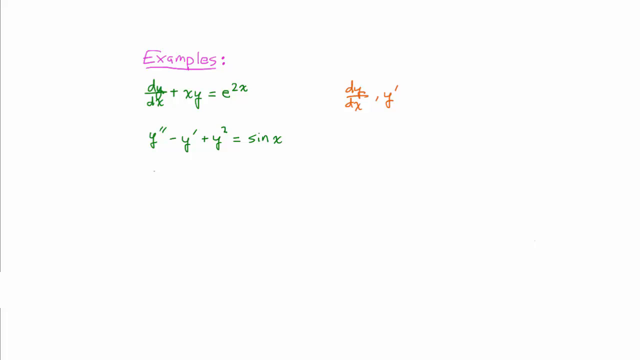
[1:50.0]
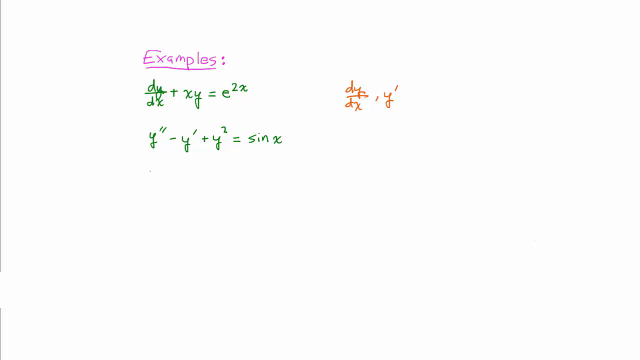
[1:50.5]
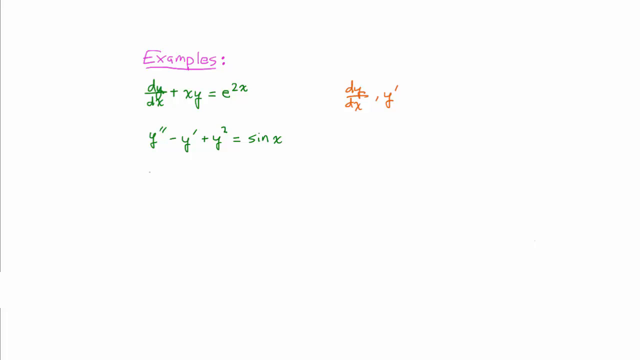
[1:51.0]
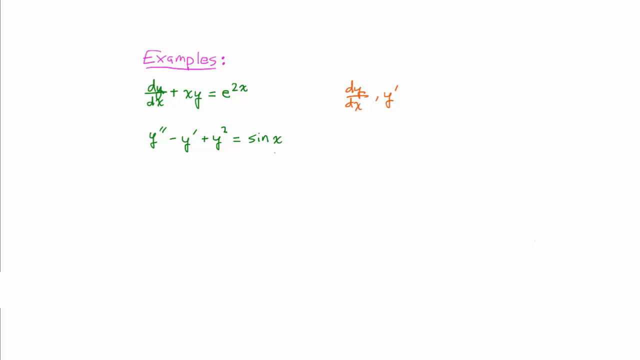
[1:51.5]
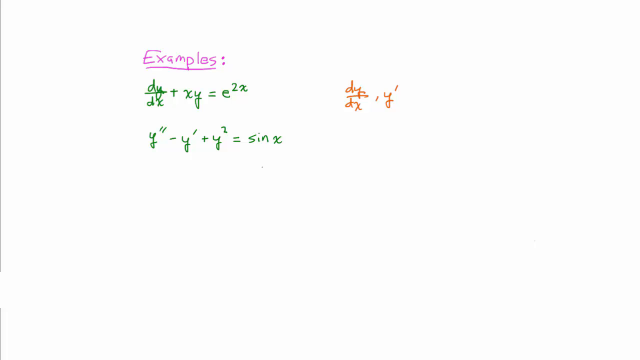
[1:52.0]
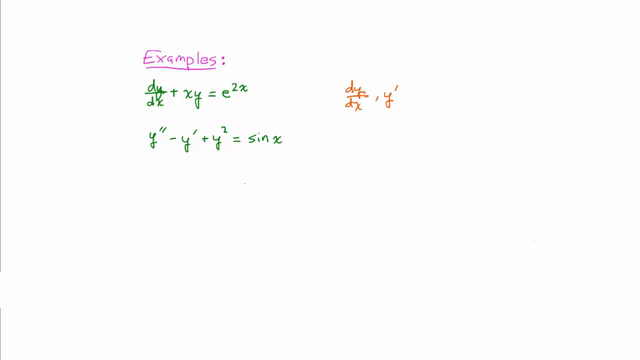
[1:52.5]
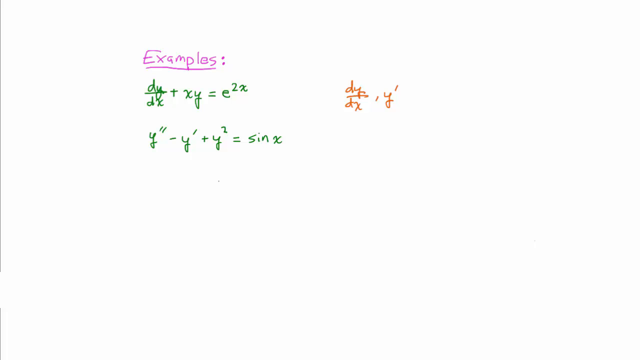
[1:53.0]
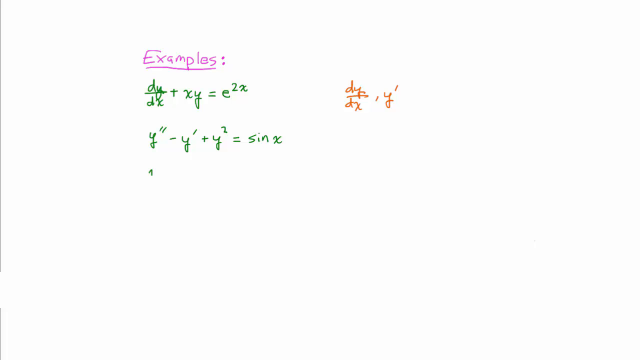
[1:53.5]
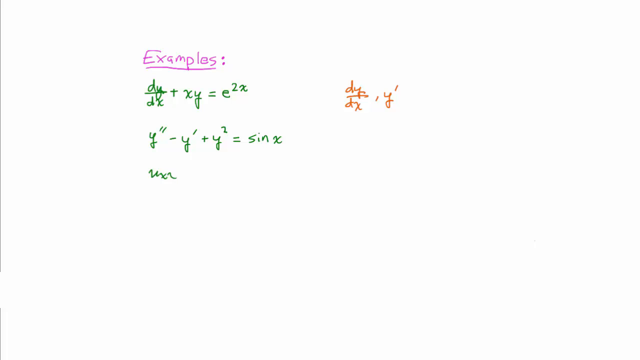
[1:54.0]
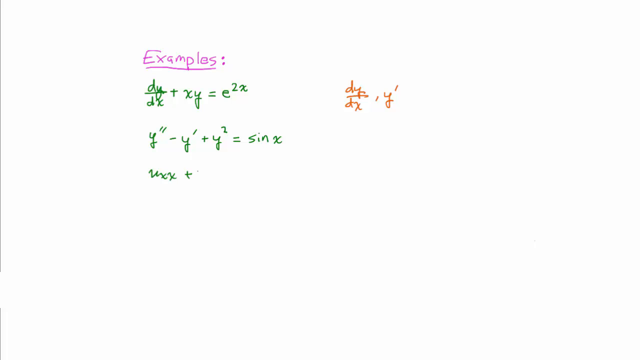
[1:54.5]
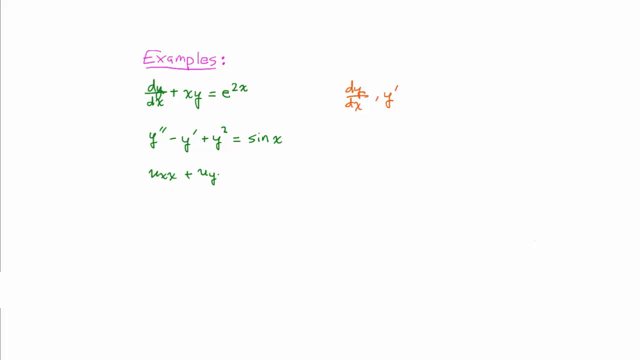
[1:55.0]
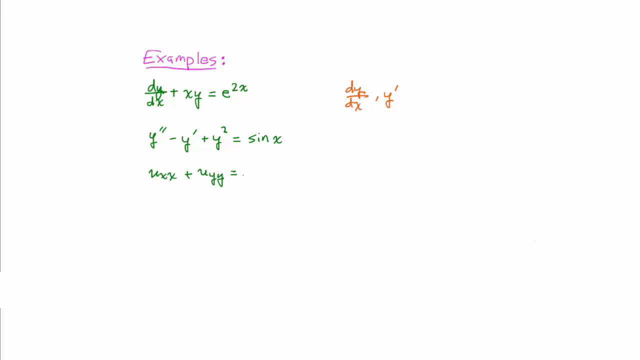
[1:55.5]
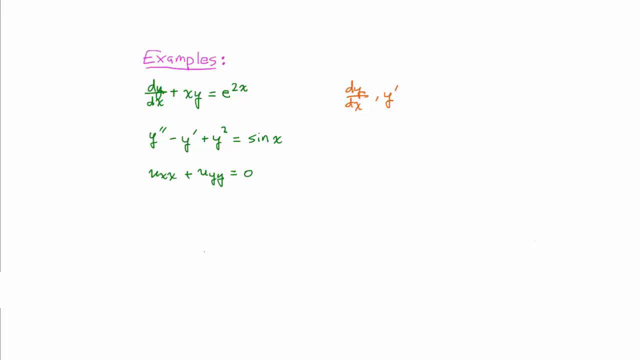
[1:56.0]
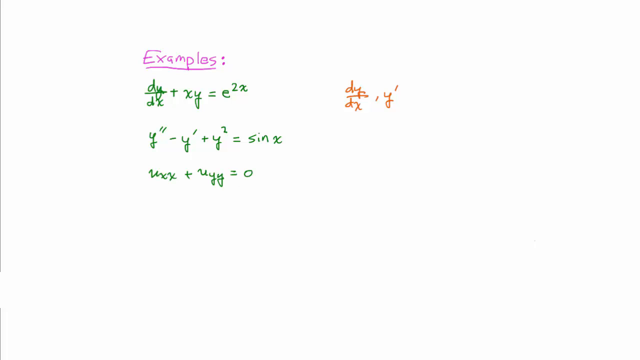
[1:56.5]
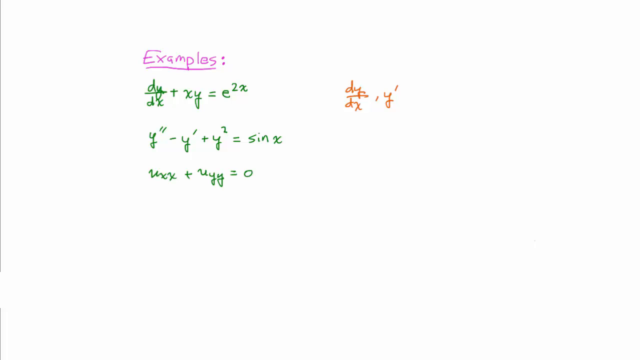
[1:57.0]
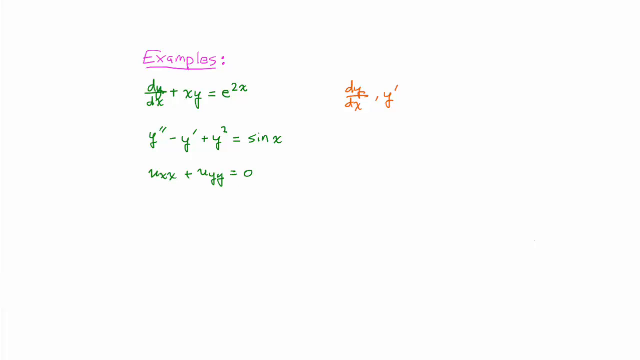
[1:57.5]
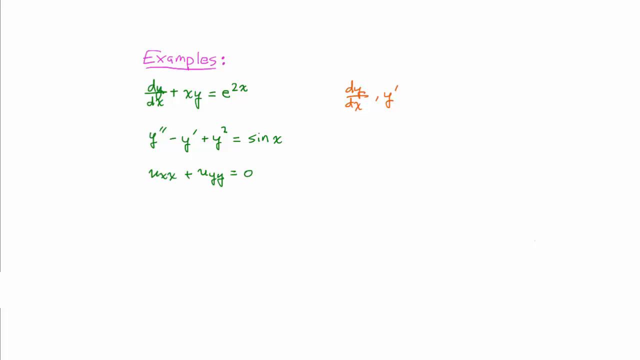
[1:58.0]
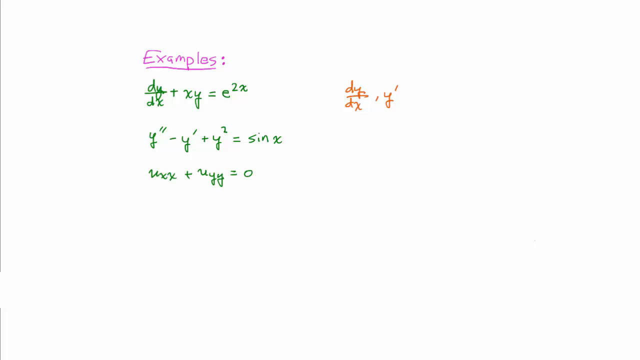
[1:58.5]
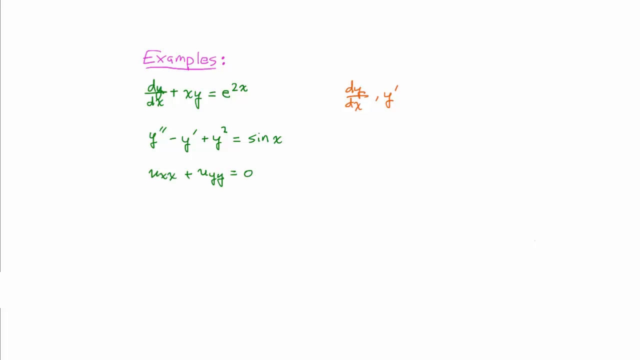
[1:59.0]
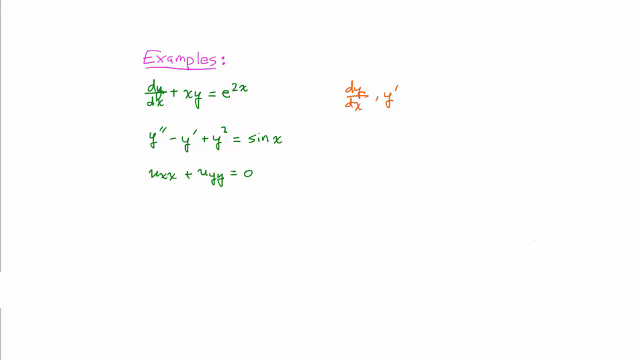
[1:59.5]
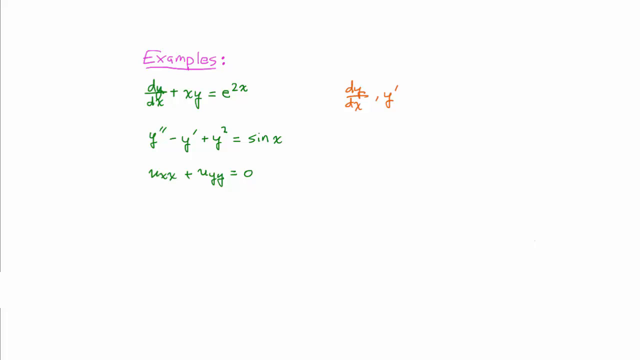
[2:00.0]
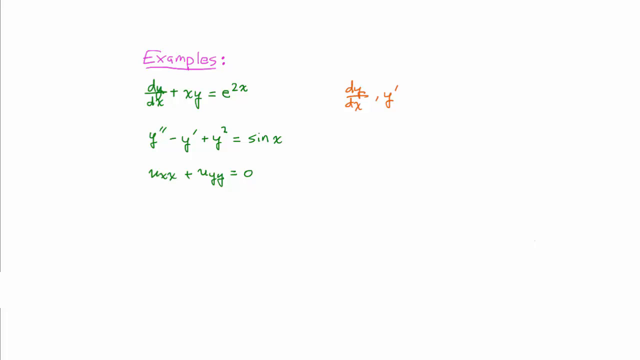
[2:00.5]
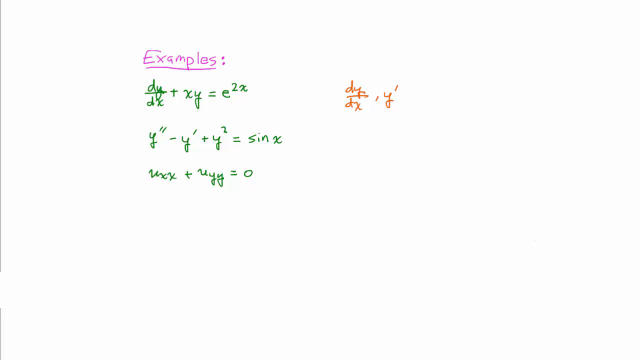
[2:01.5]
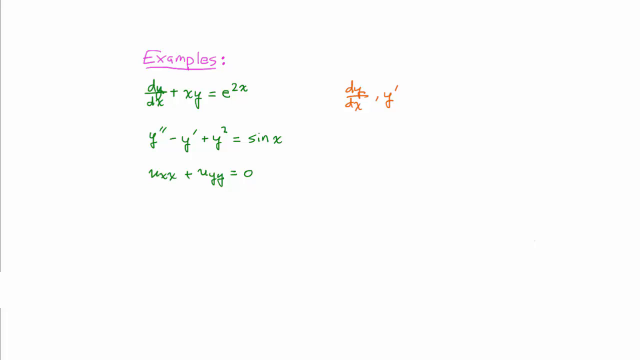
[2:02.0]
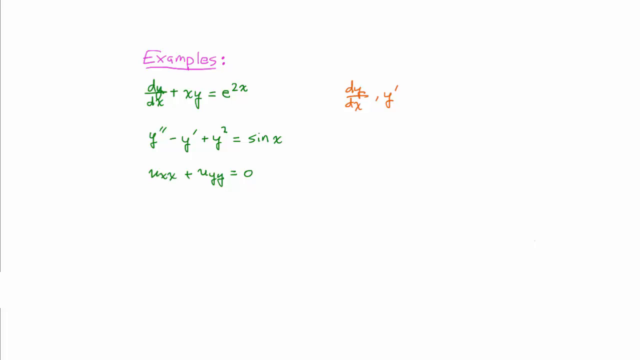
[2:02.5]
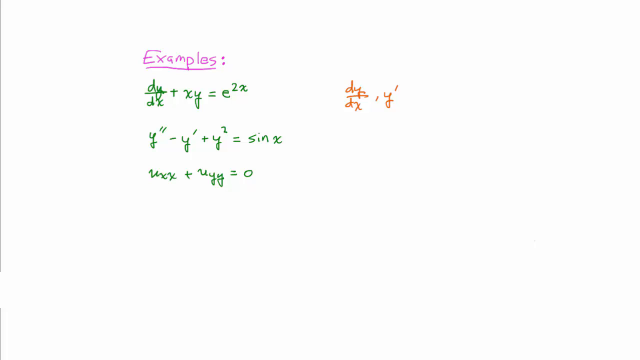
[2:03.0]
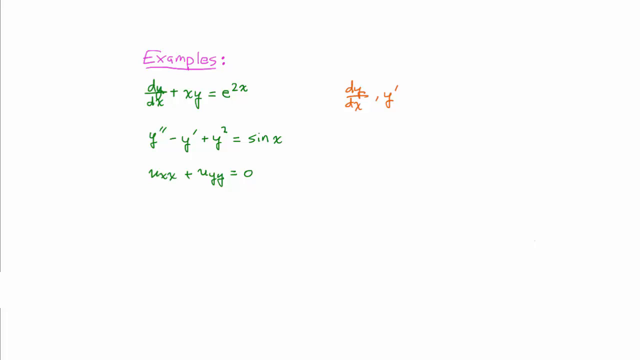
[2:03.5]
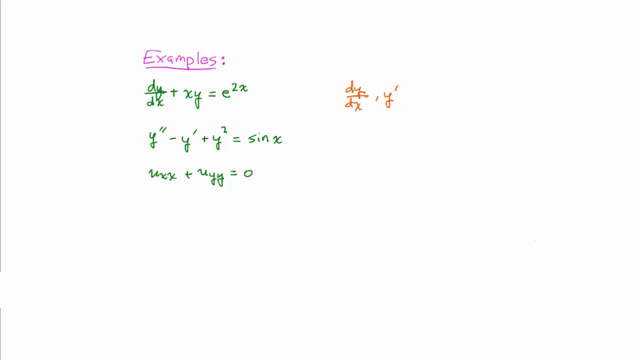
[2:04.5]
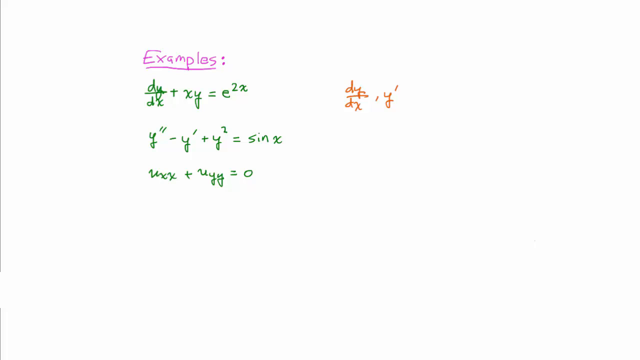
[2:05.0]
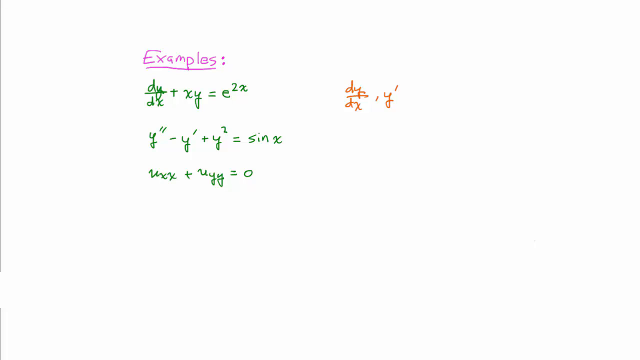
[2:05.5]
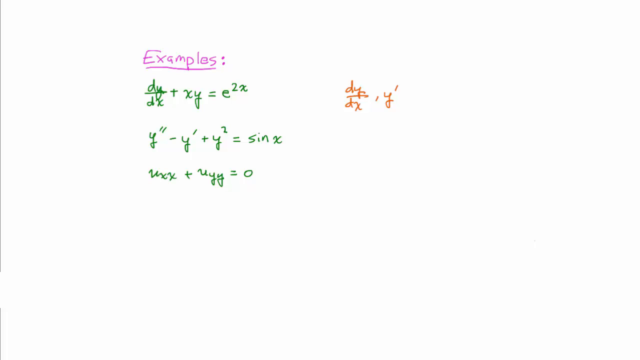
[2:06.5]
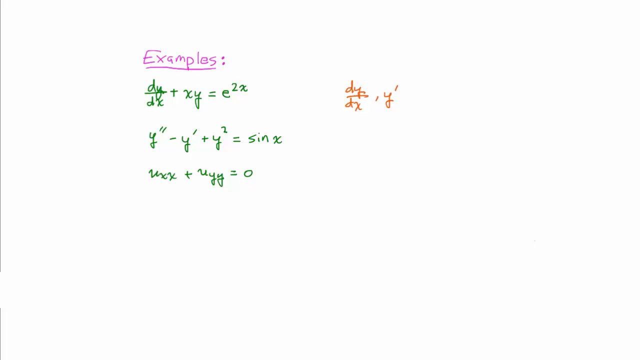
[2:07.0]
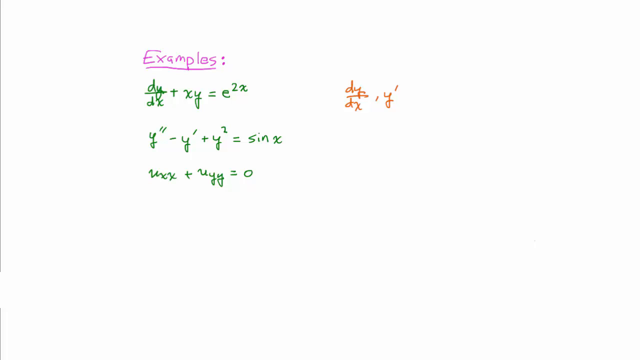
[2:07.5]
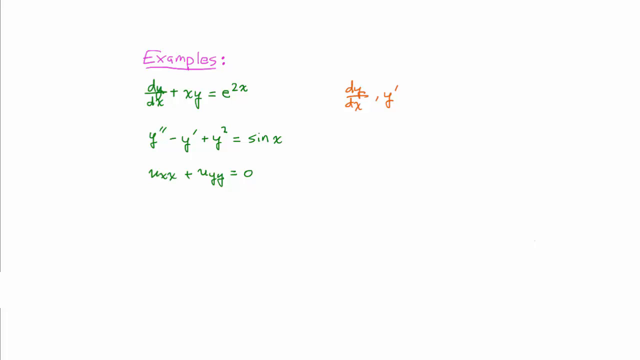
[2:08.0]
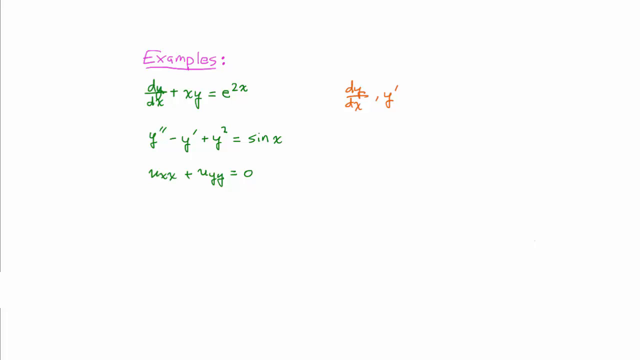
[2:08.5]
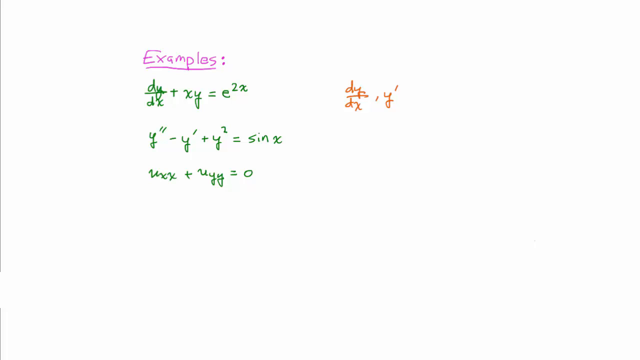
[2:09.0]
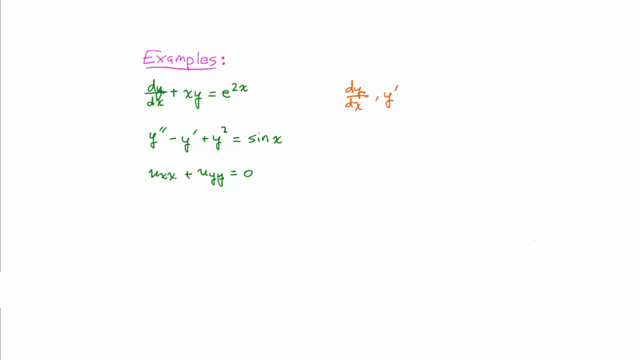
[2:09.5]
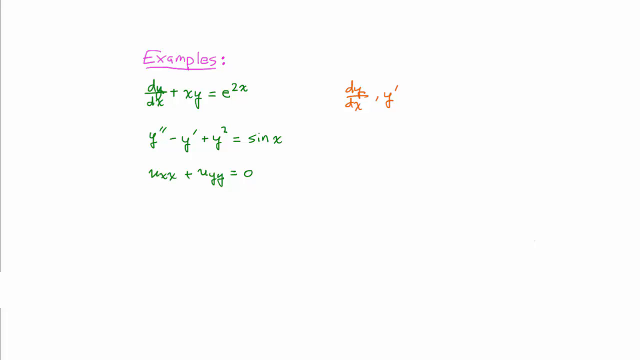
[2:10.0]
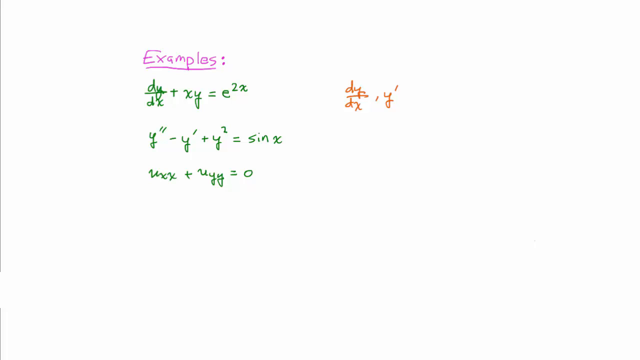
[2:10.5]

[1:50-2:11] On the white background, about an inch from the top and two and a half inches from the left, "examples" is written in purple ink with a purple line underneath it. Everything below is lined up with "examples" down the left side, except for the red writing, which is just right of center. In green ink is "dy over dx plus xy equals e to the second power," with a small x by the two. The next line down has a y with two lines angled up to the right, almost like parentheses, minus y with just one of the lines angled up to the right, plus y to the second power, equals sin x. Below that, hard to read, the writing looks like uxx plus uyy equals zero. Up and just right of center, lined up with the top row of green, red ink reads dy over dx minus y, with a small line above it like the others.